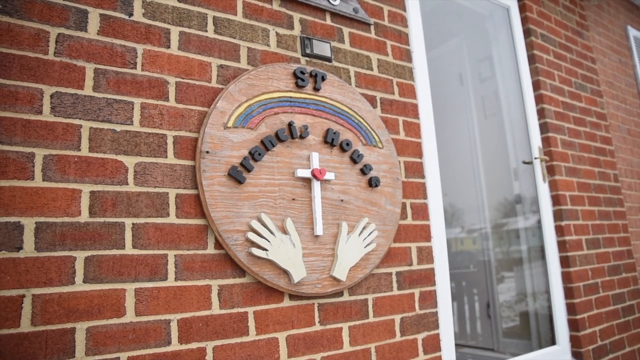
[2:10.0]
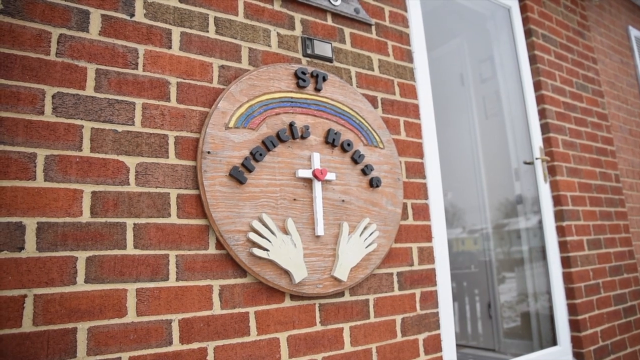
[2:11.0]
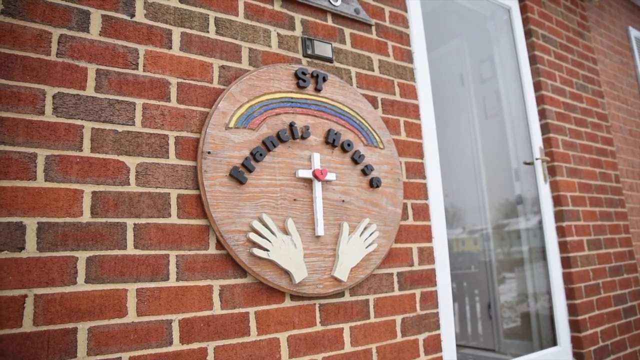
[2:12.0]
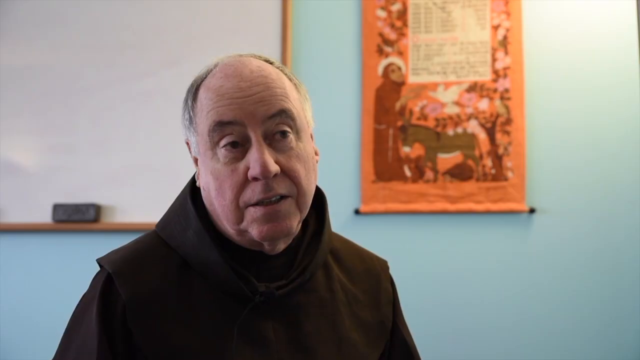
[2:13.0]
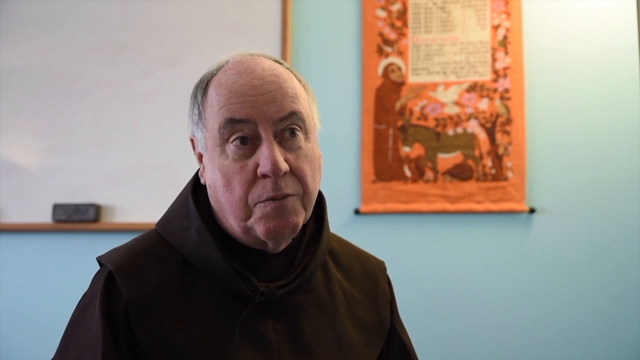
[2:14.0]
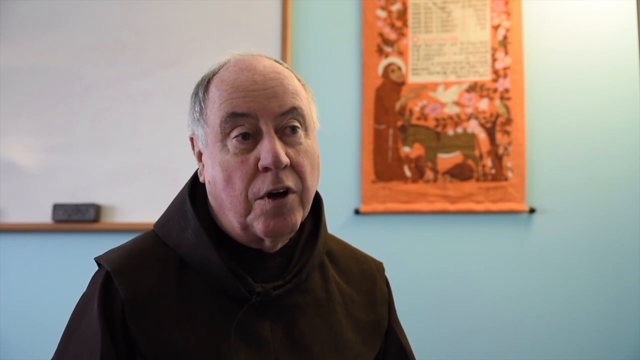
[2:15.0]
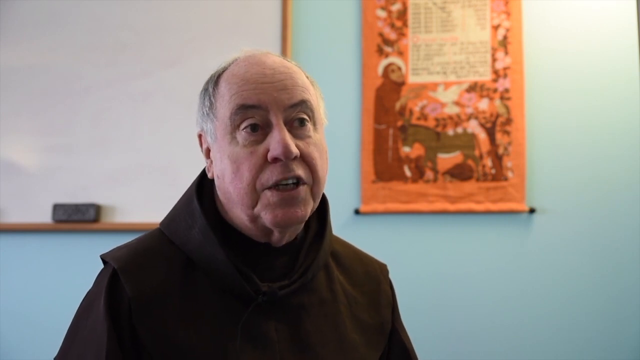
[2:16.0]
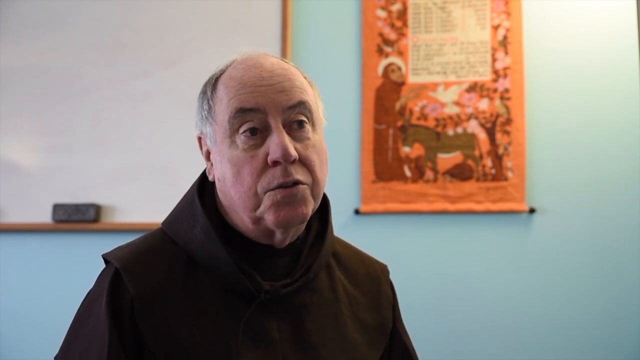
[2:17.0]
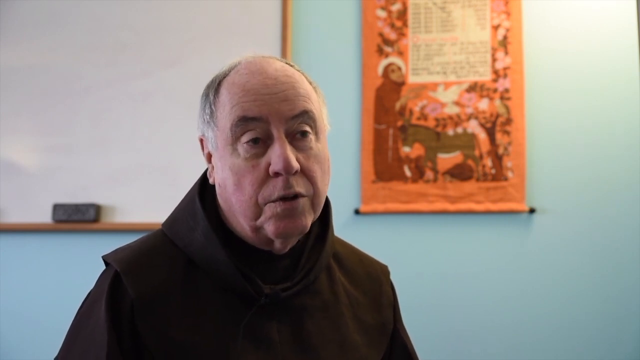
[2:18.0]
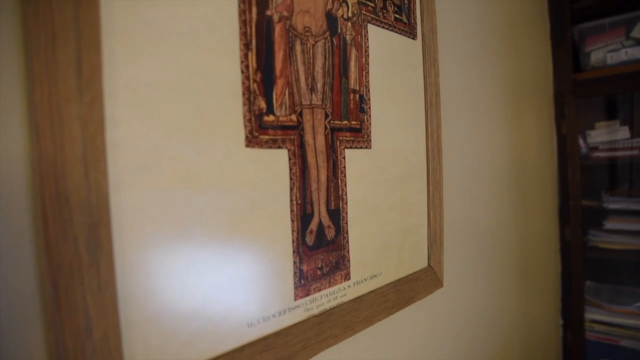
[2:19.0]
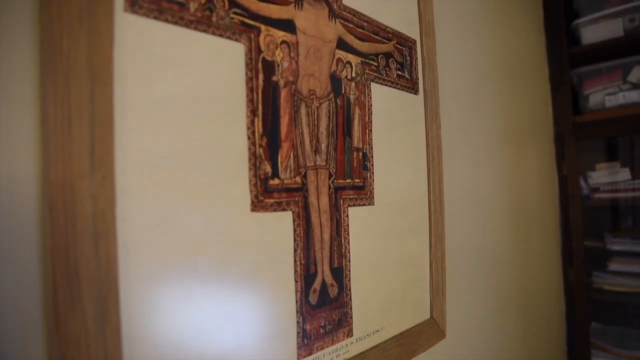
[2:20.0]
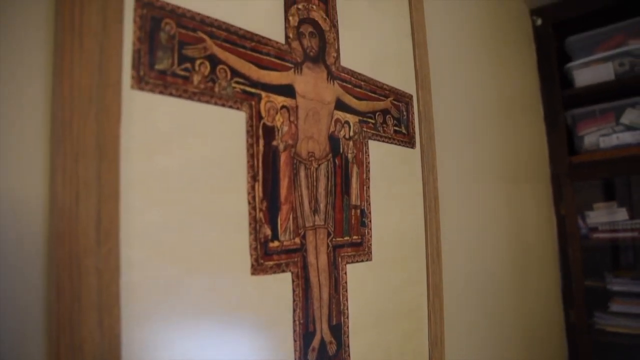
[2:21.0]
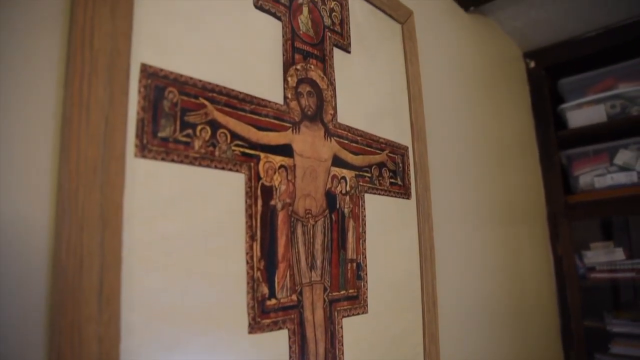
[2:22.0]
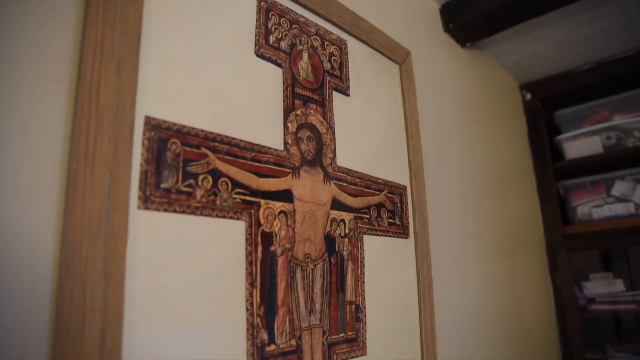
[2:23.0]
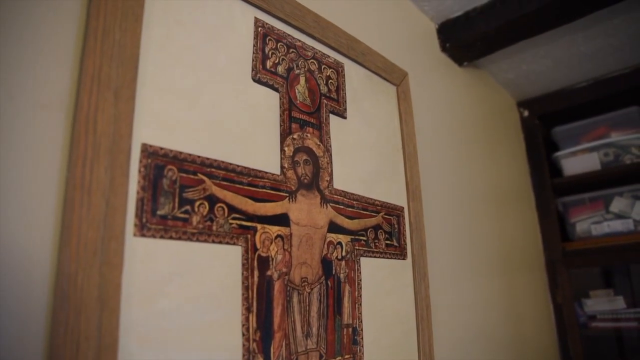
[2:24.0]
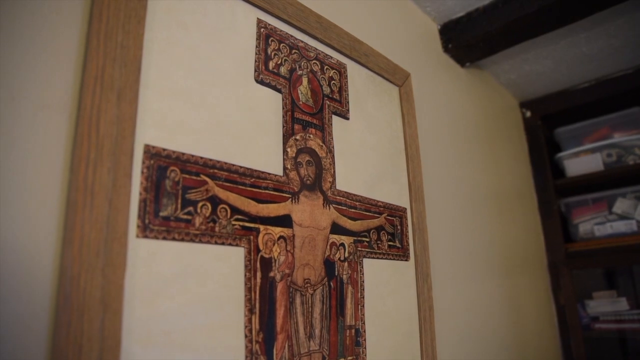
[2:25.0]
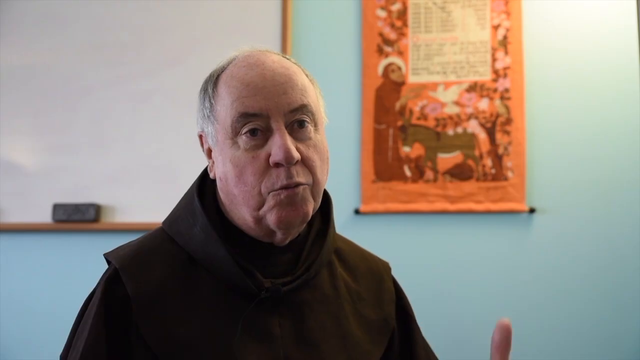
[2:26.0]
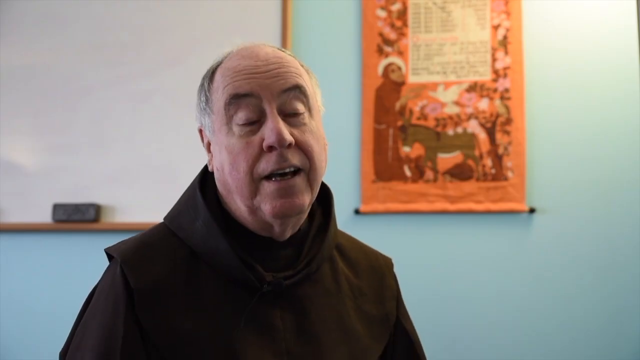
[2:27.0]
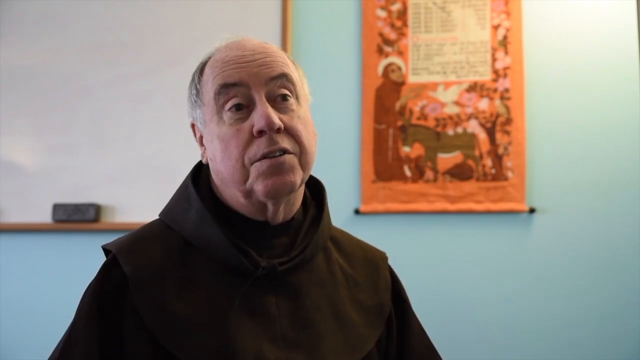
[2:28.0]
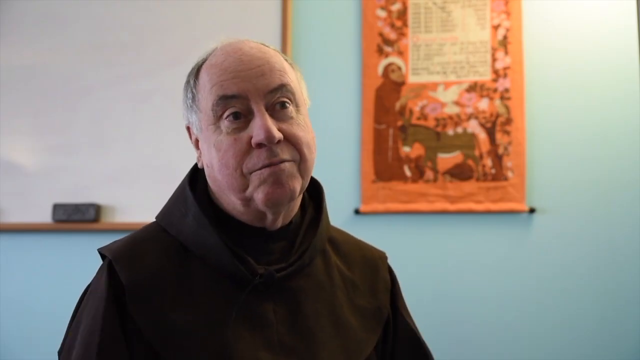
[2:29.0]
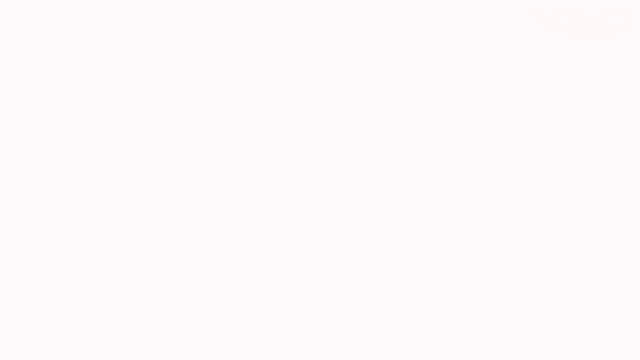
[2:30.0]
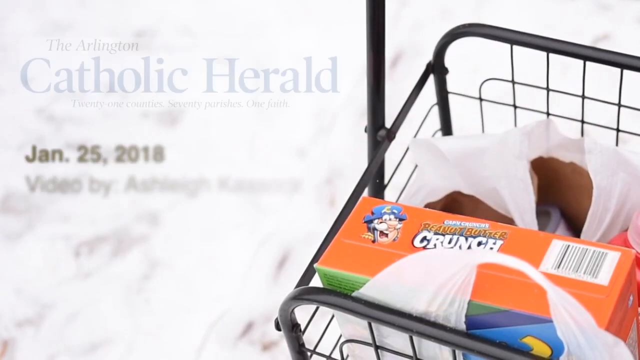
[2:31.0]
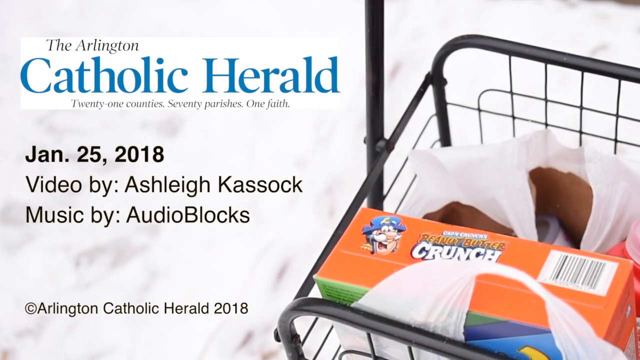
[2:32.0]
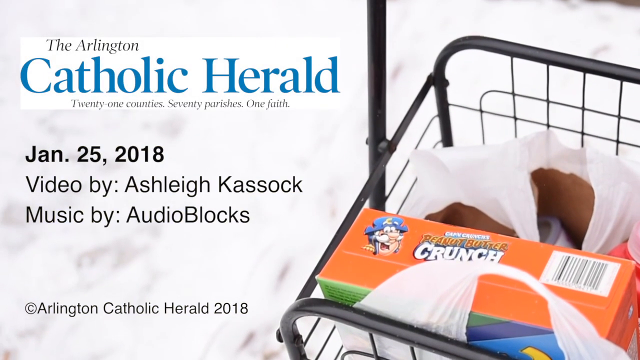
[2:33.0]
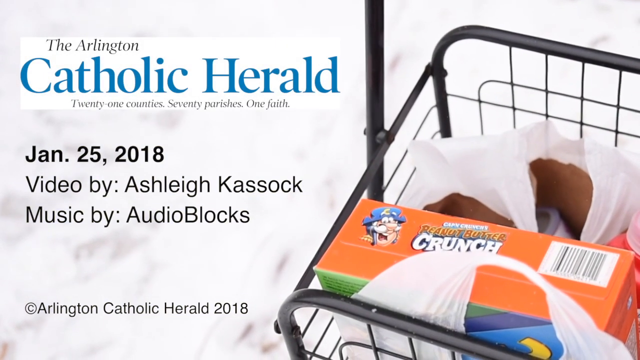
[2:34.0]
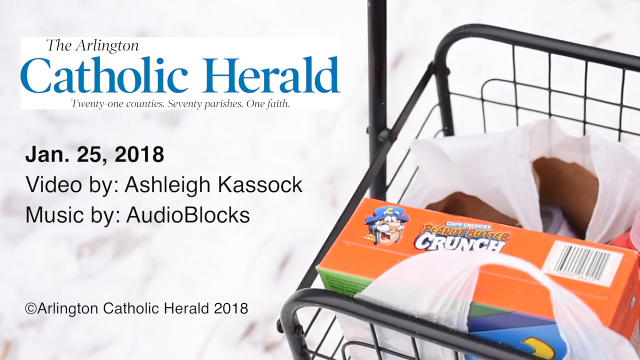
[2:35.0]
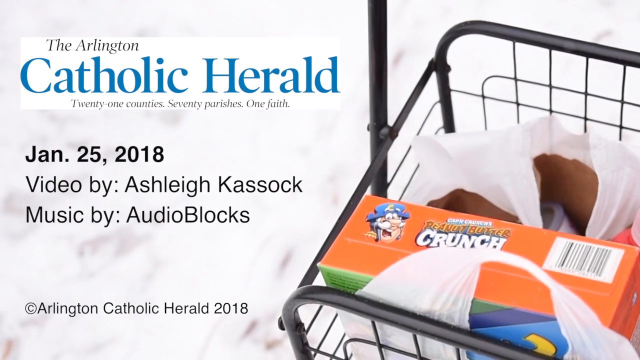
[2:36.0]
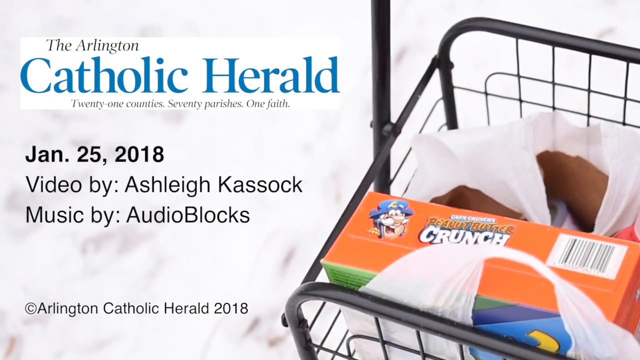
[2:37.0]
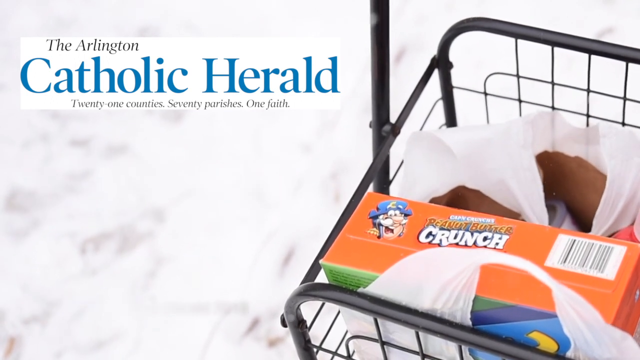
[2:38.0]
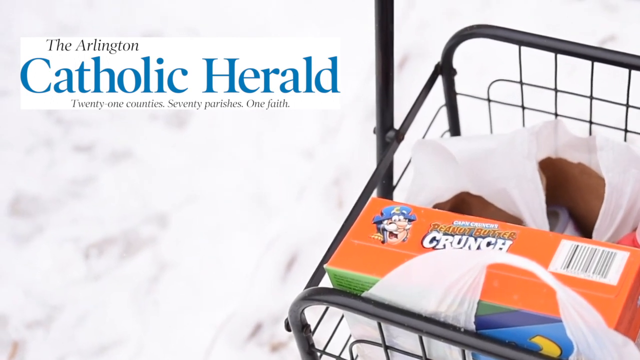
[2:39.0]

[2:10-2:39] The man appears wearing a black suit that looks like a sweater; he is bald, in his mid-60s, and speaks to the camera. Behind him is a whiteboard with something written on it, a blue wall, and something hung on the wall that looks like an artwork. An image of a crucified Jesus is visible. Text mentions "Arlington" and "Arlington Catholic", and credits read "January 25 2018", the video by Ashley Carlson, and the music by audioblocks. There is a shopping trolley with goods inside, like crunchies.